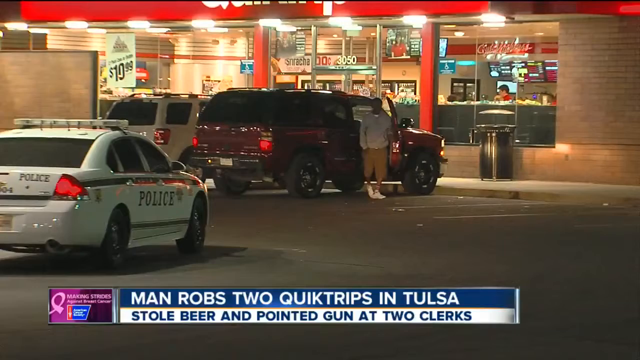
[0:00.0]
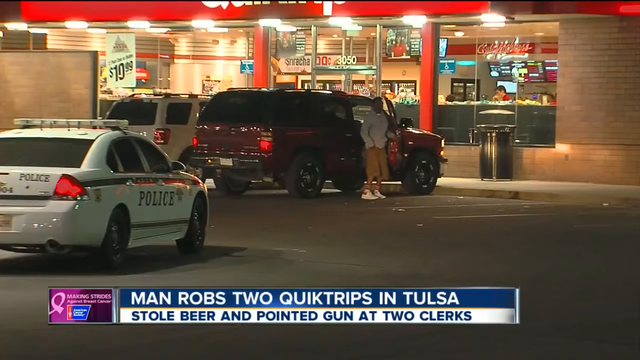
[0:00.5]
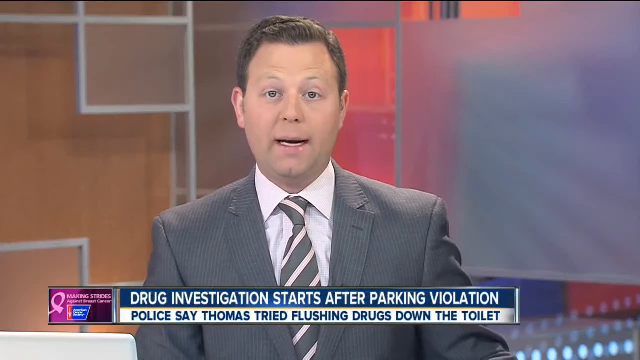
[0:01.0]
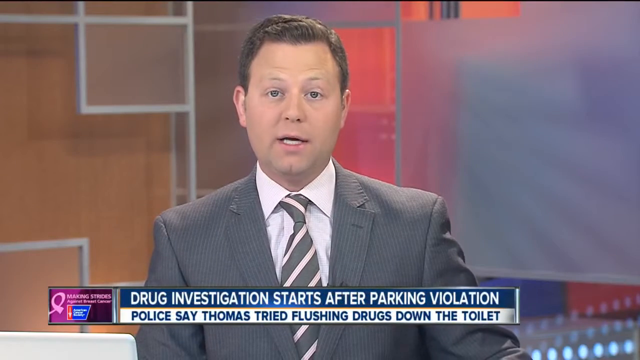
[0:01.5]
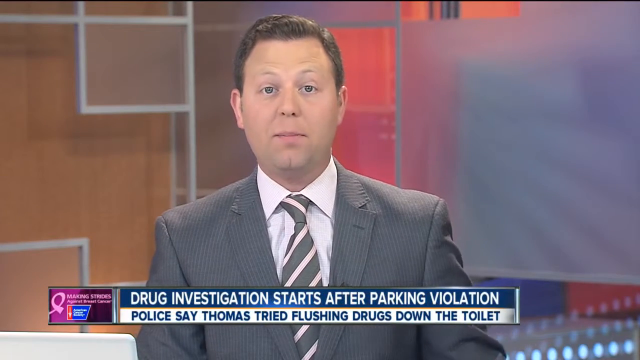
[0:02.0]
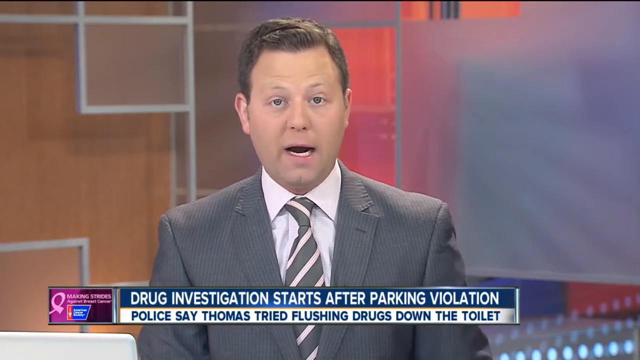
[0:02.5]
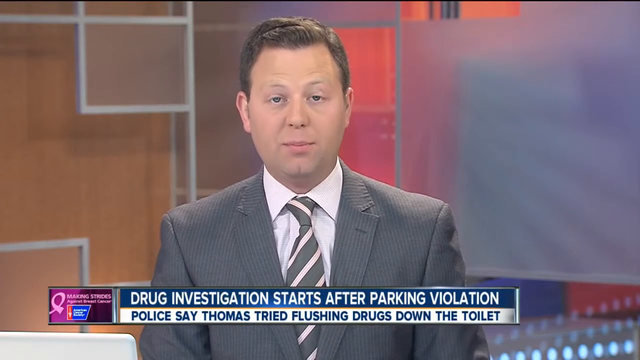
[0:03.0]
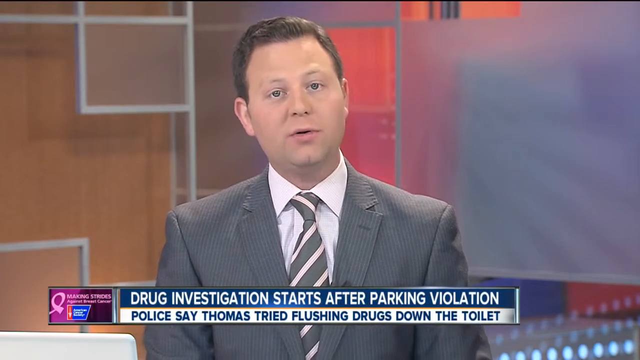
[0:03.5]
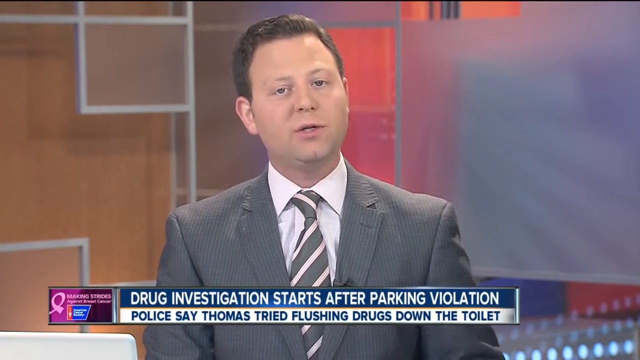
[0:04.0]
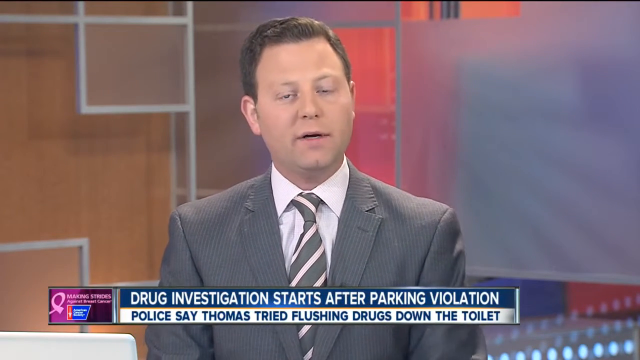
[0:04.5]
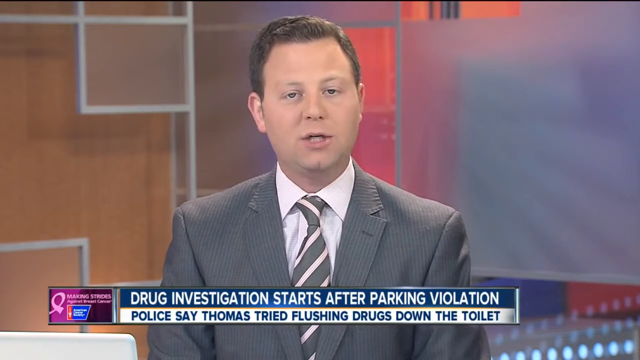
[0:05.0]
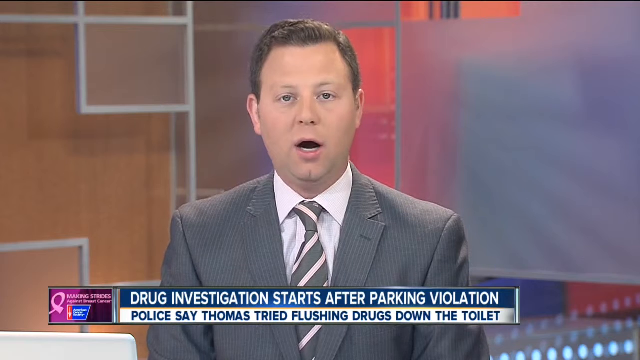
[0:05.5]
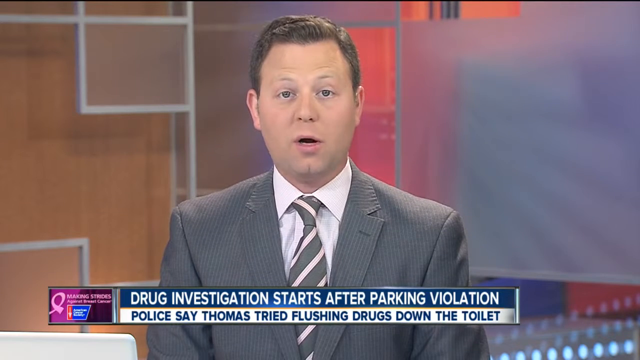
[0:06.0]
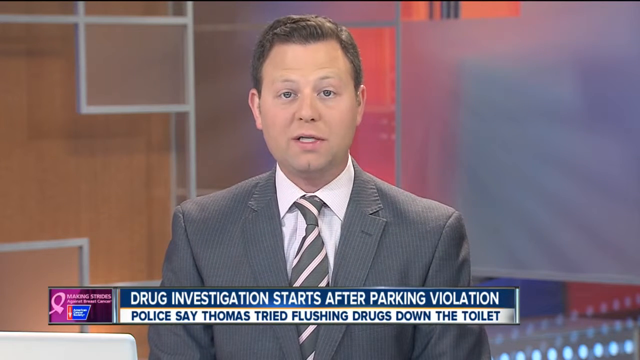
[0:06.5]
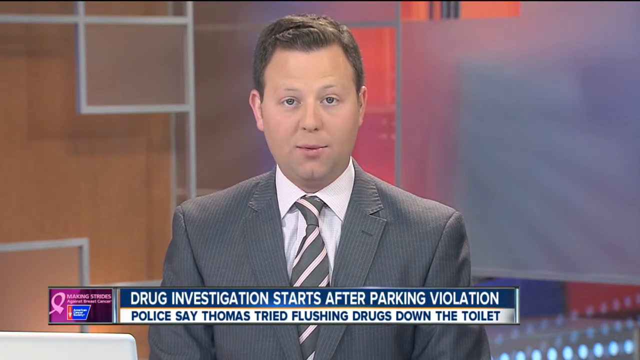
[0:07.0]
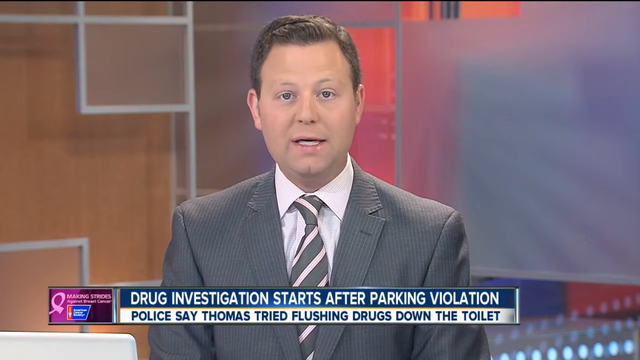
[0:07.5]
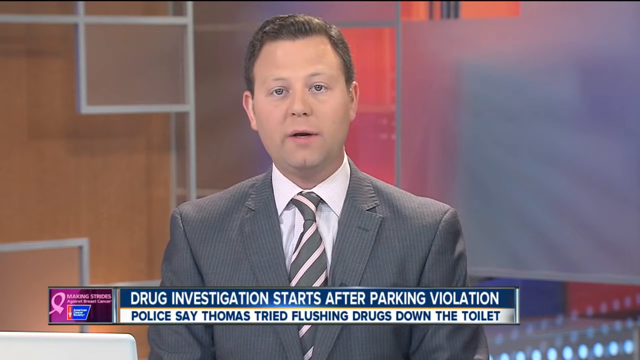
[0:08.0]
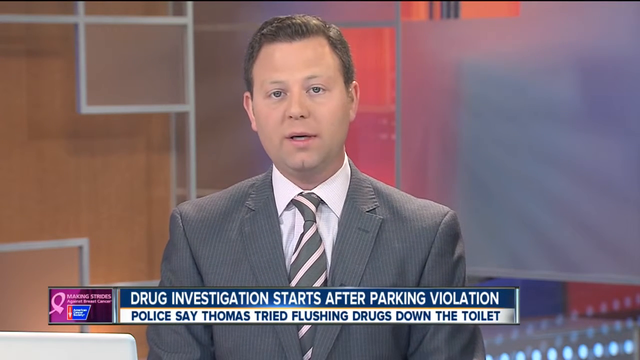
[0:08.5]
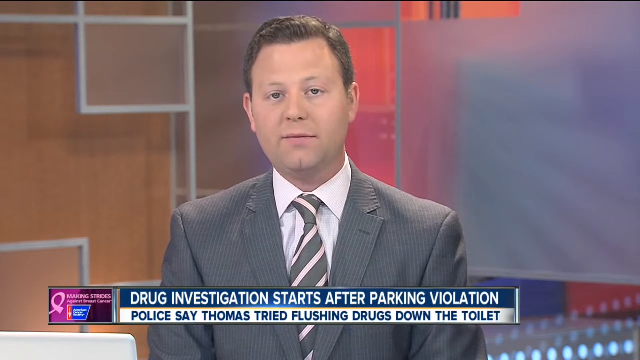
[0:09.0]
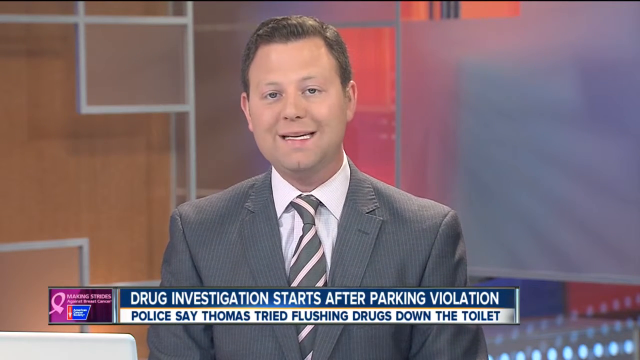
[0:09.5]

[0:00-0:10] A local news broadcast shows a host wearing a gray suit with a white shirt and a striped tie, kind of a gray striped tie. He looks to be in either his late 40s or early 50s and is sitting in a local TV studio. The bottom banner reads "Drug Investigation Starts After Parking Violation." Text also reads "Police say Thomas tried flushing drugs down the toilet." The host continues to talk.